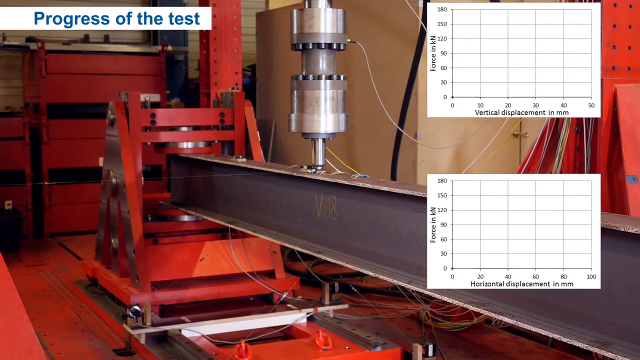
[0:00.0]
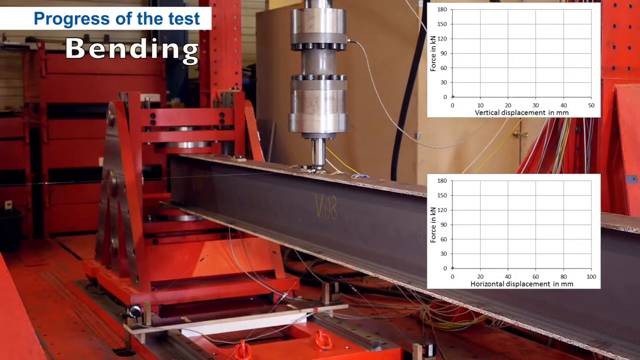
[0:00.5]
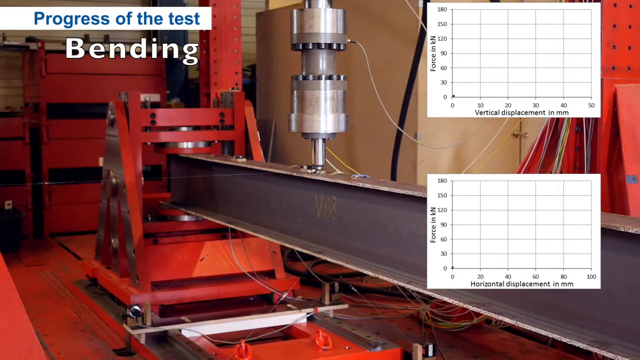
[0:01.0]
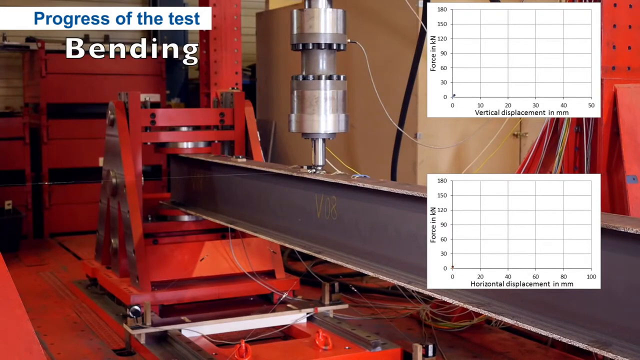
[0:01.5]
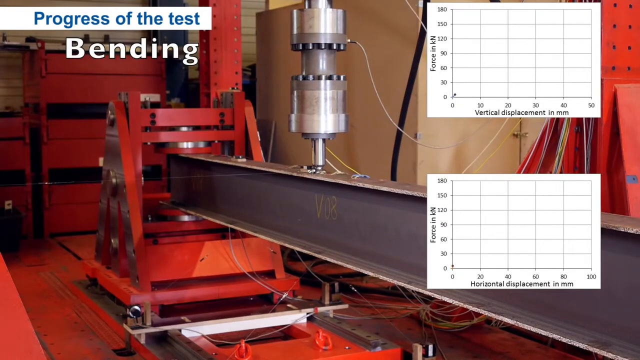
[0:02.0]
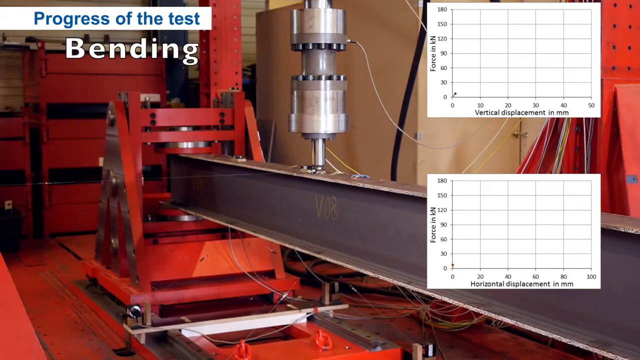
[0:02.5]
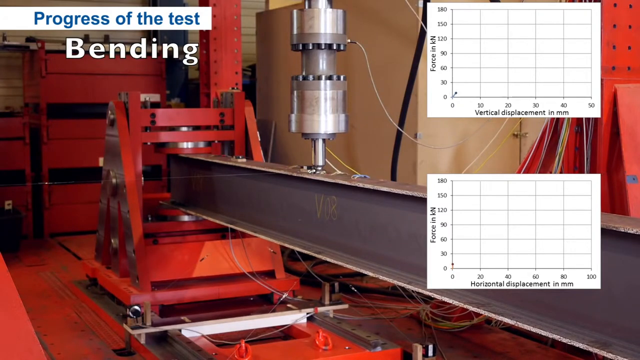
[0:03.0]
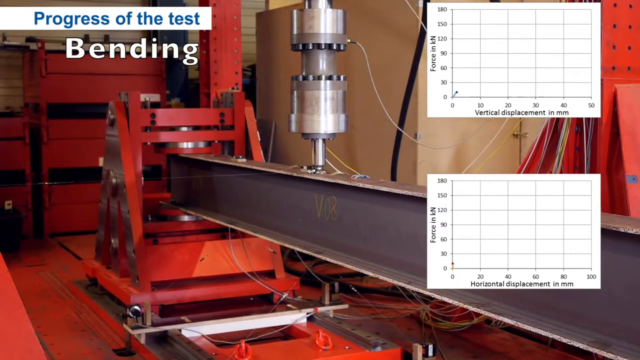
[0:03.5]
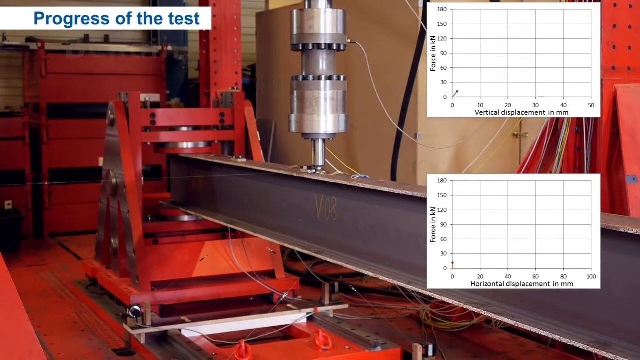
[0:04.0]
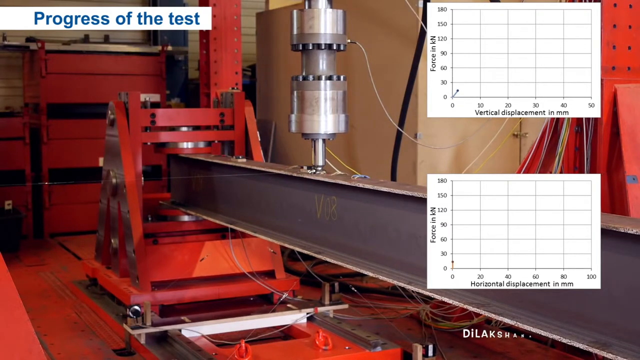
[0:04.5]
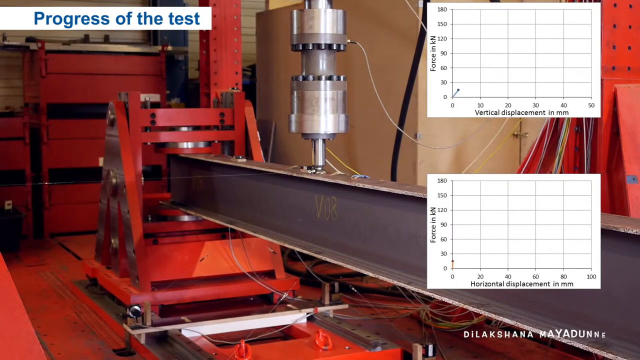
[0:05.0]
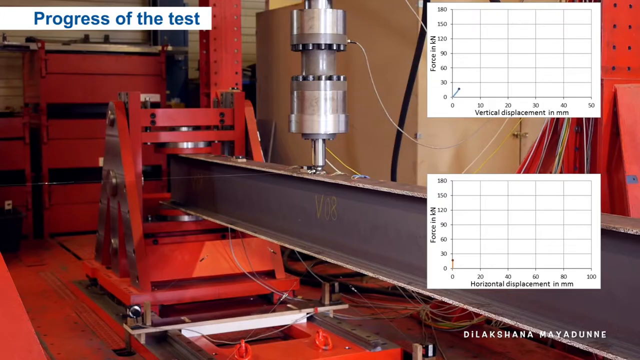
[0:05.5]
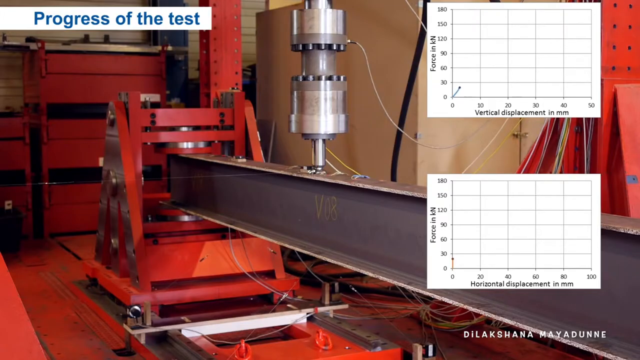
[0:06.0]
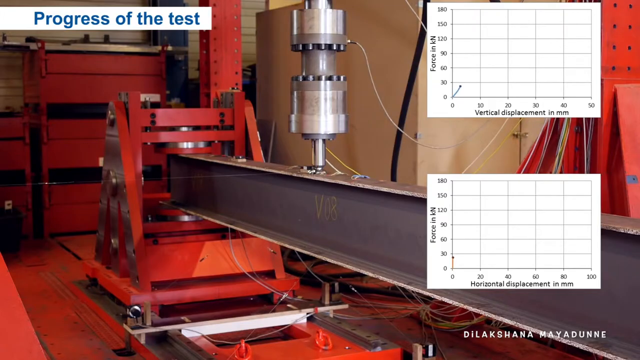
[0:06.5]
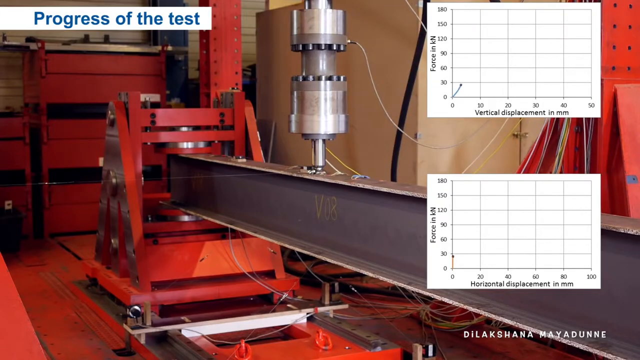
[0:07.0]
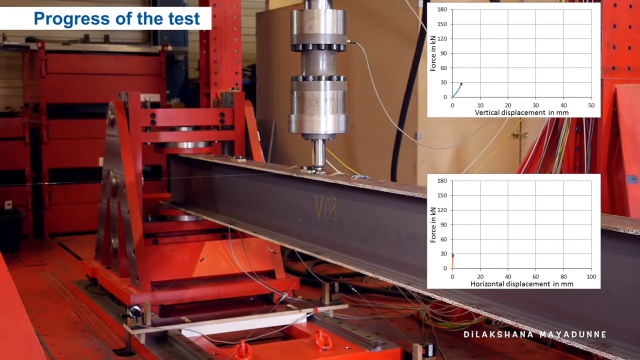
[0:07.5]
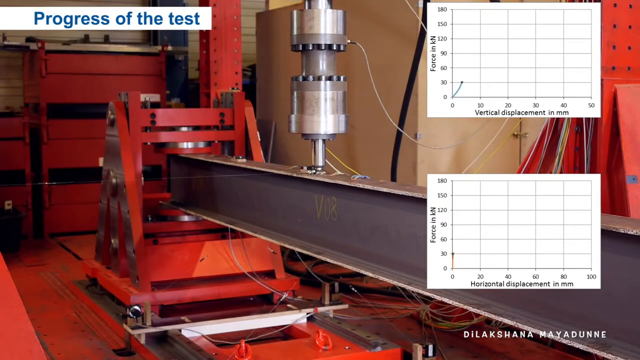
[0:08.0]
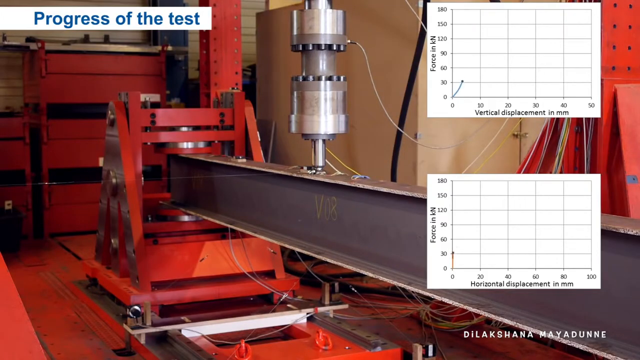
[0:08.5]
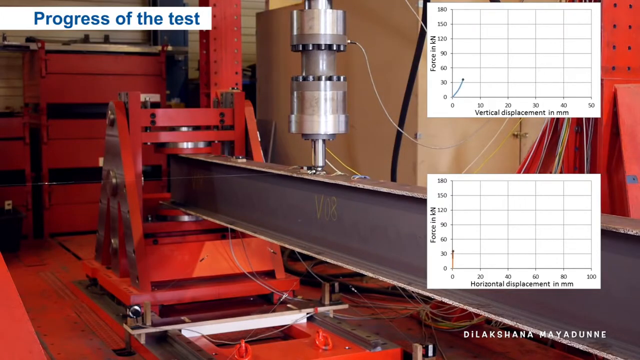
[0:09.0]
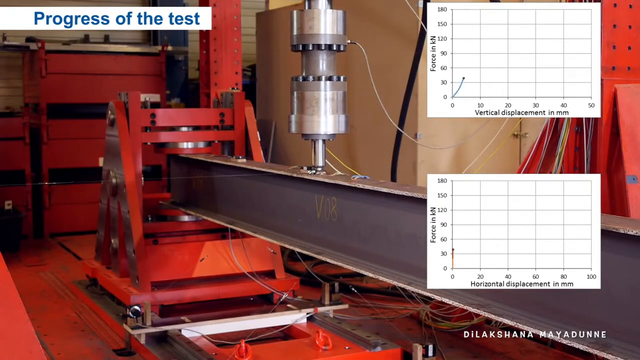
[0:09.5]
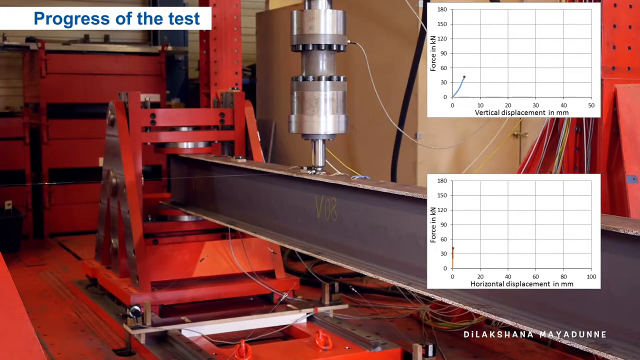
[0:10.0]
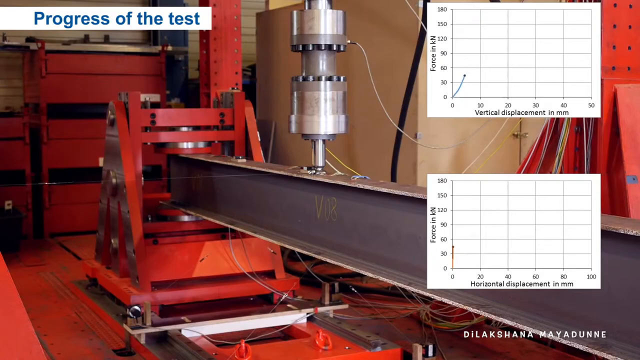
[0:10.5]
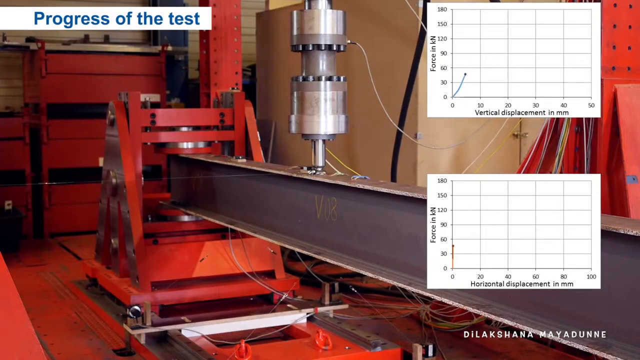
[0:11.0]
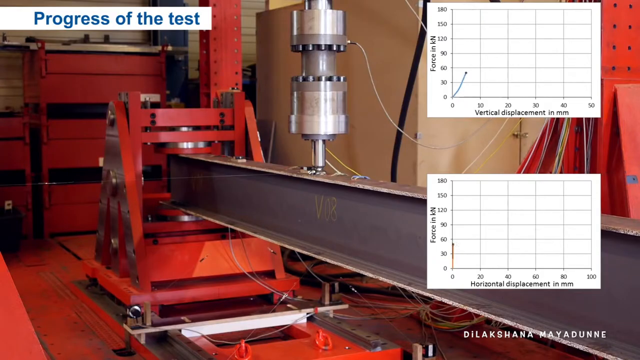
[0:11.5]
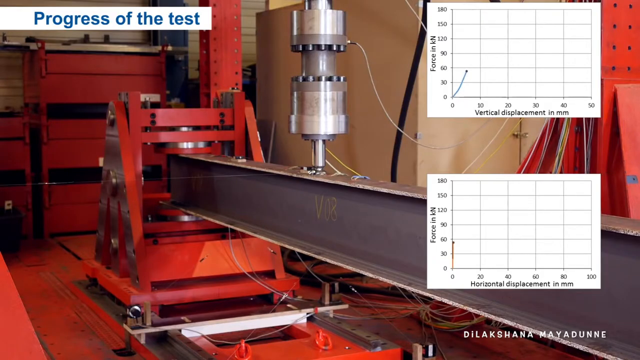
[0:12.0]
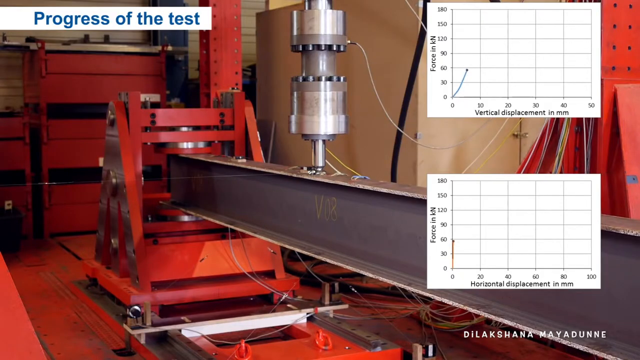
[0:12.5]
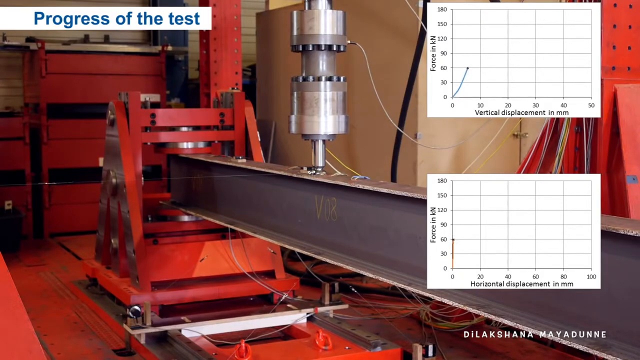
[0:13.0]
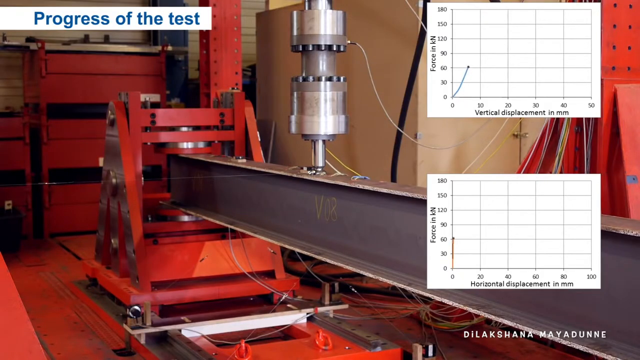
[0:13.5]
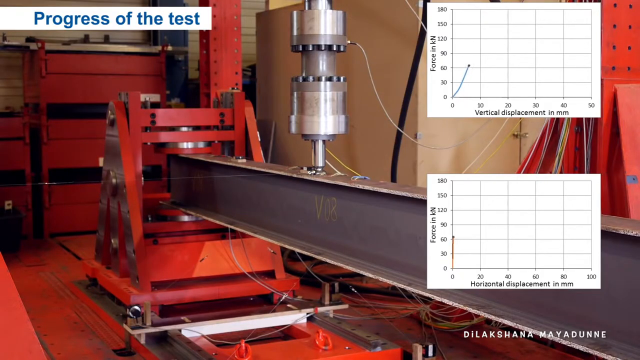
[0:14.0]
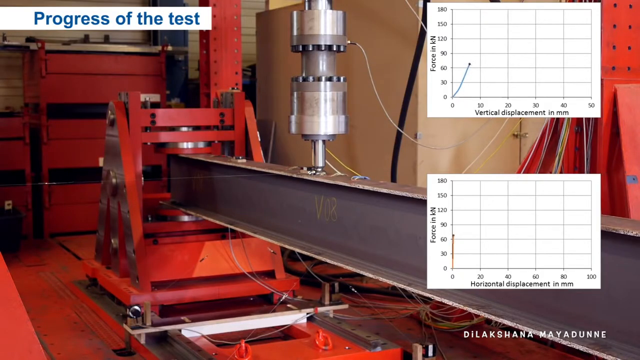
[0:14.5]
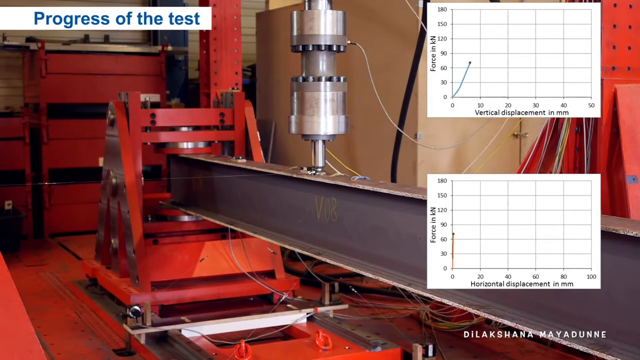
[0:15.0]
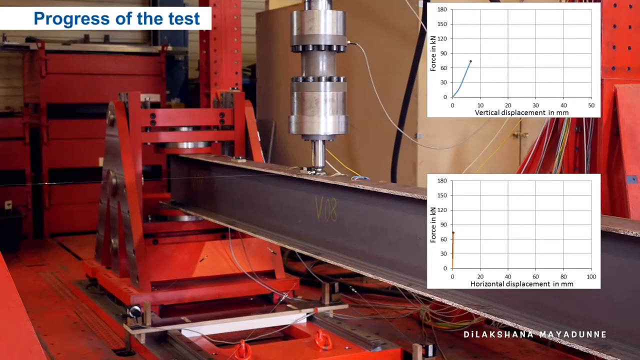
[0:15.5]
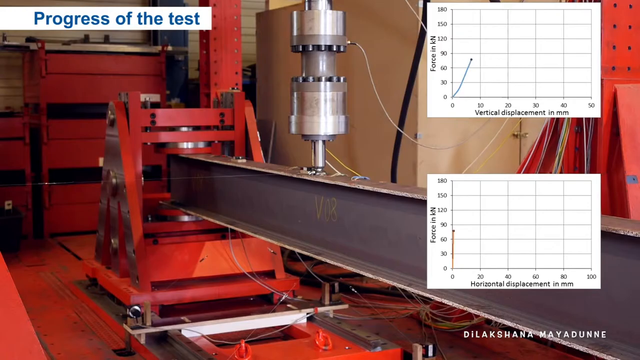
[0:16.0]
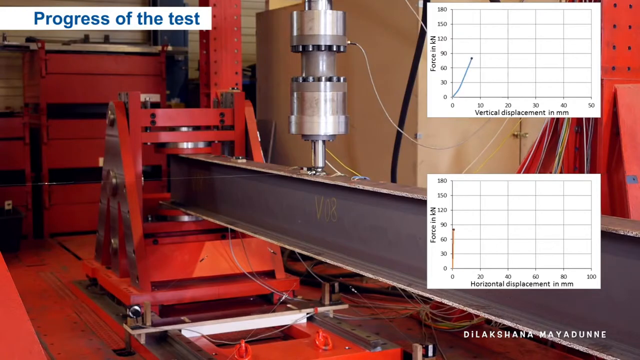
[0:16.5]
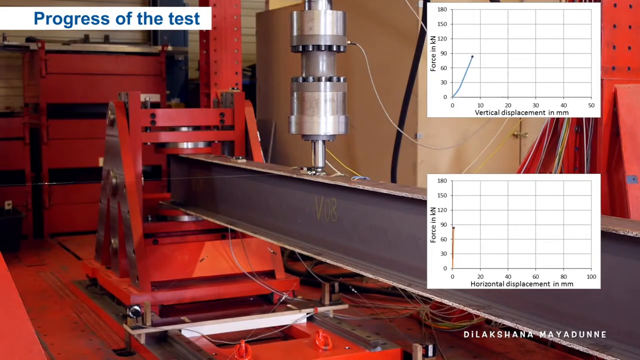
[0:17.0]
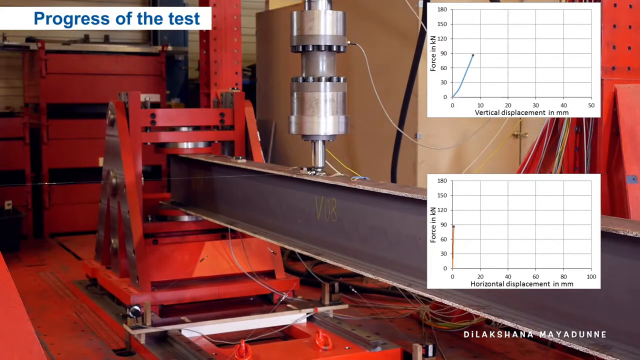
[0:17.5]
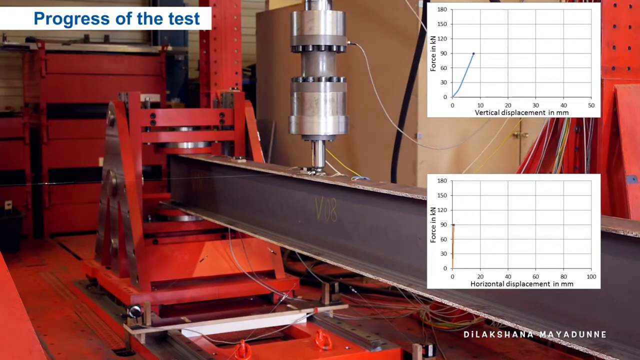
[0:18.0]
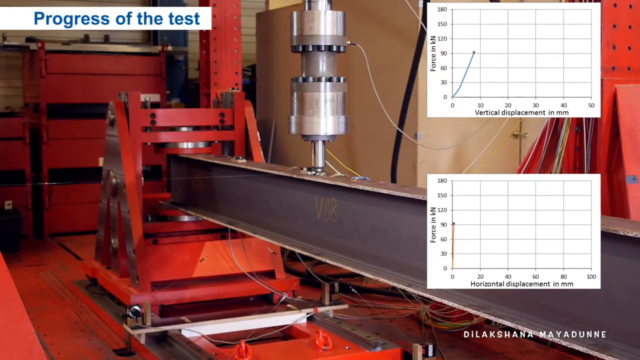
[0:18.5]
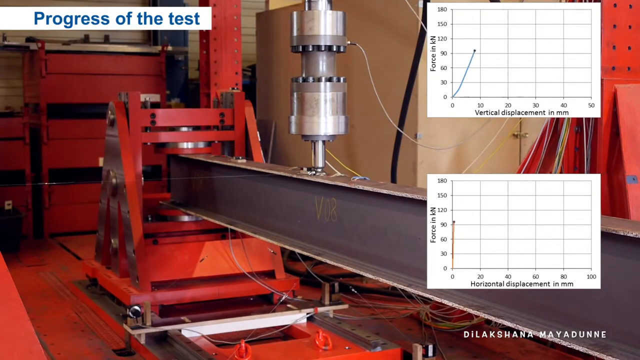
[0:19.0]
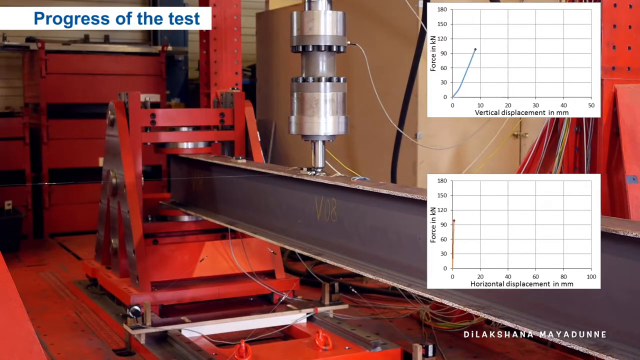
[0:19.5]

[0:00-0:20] Several graphs appear on screen, each with force on the y-axis and vertical displacement in millimeters on the x-axis. The graphs are connected to the machines shown on the screen. The machines are rotated in a certain fashion, with a large bar running across the middle of the screen and a cylindrical object in the upper central portion. The cylindrical object and the bar across the middle are connected, and the setup is held up by some kind of red object at the very end of the bar. The room is a laboratory-like setting with various other objects in the background. There are no people, but many wires are scattered across the area.